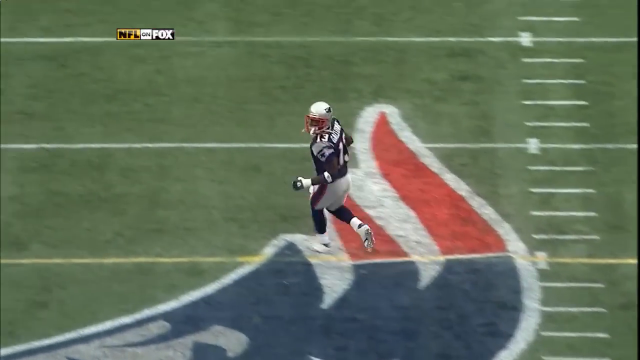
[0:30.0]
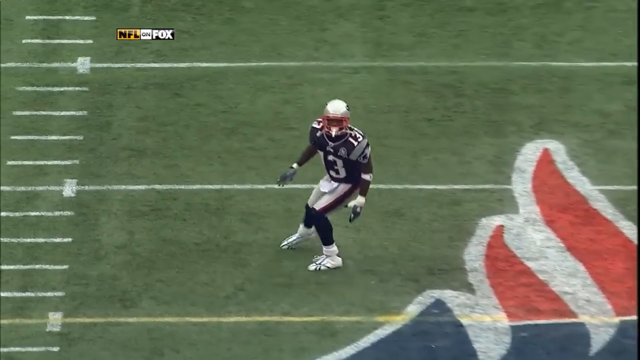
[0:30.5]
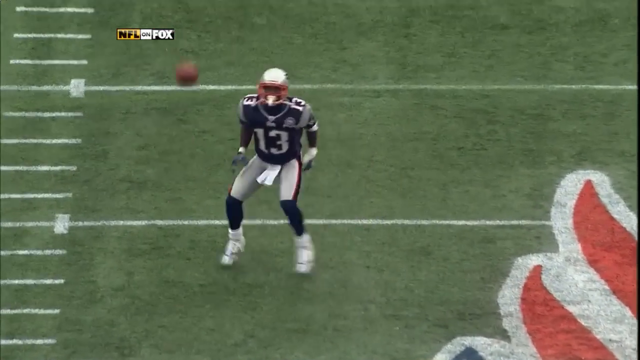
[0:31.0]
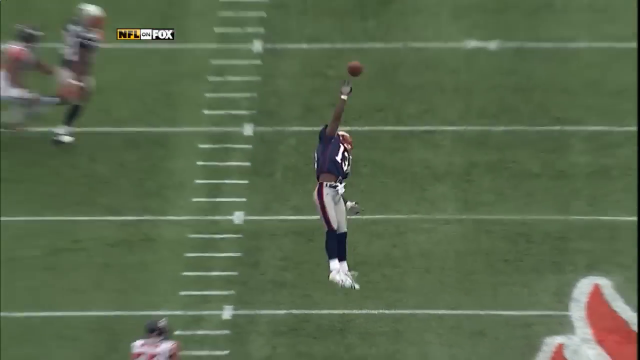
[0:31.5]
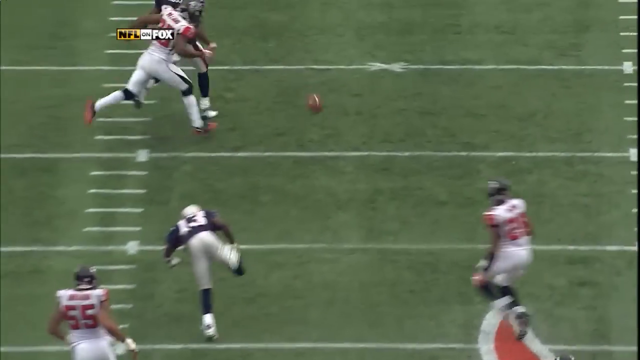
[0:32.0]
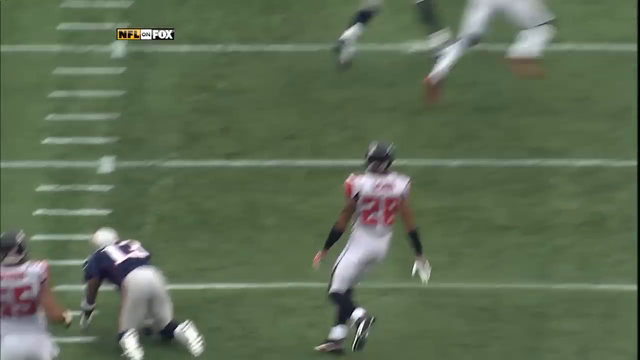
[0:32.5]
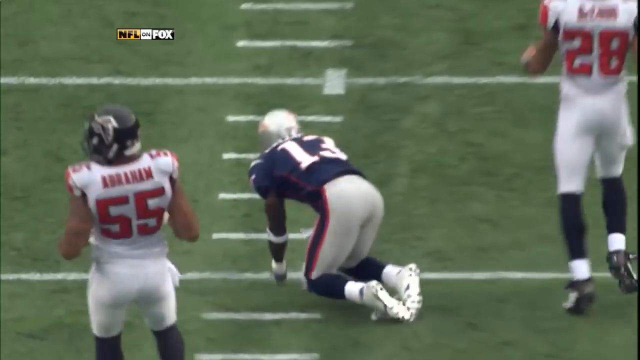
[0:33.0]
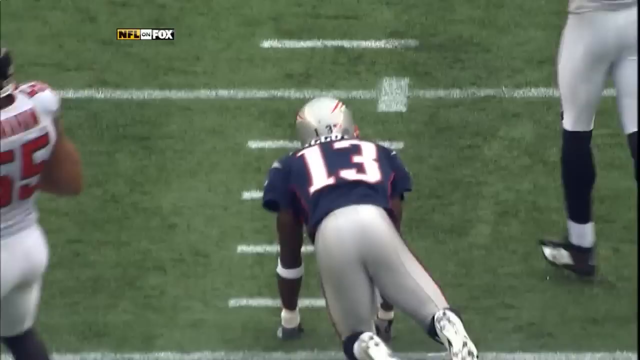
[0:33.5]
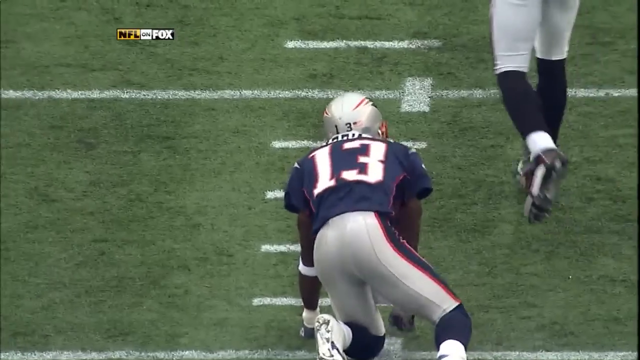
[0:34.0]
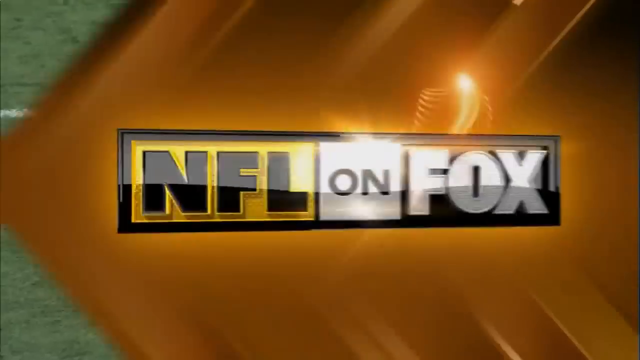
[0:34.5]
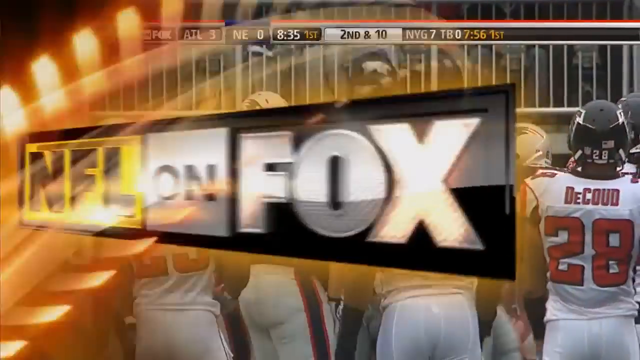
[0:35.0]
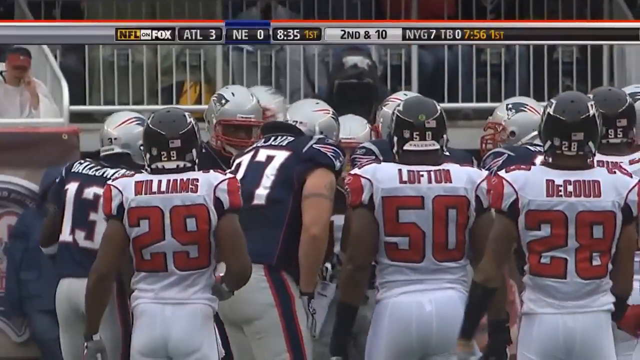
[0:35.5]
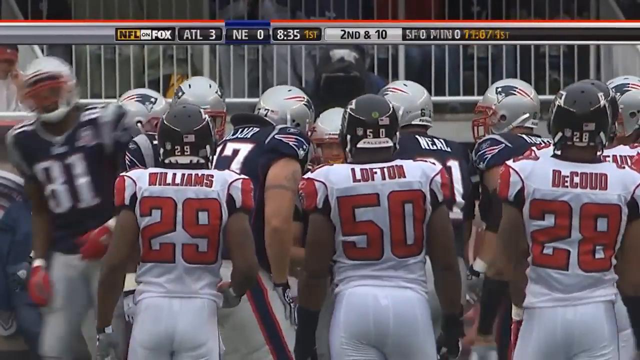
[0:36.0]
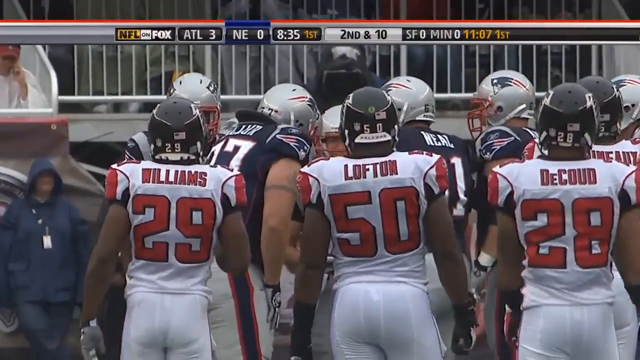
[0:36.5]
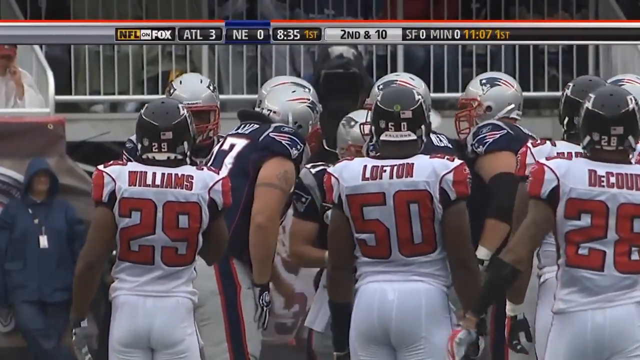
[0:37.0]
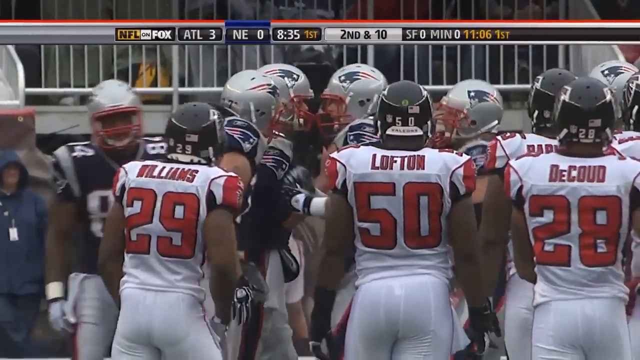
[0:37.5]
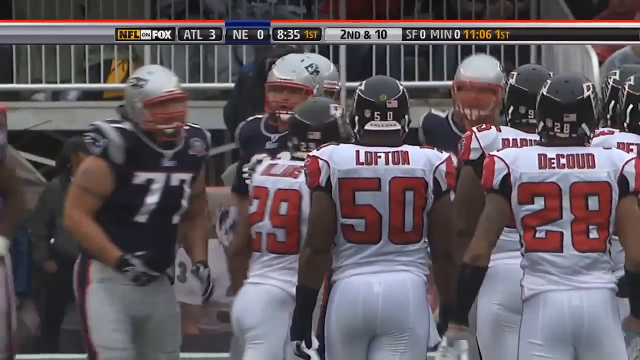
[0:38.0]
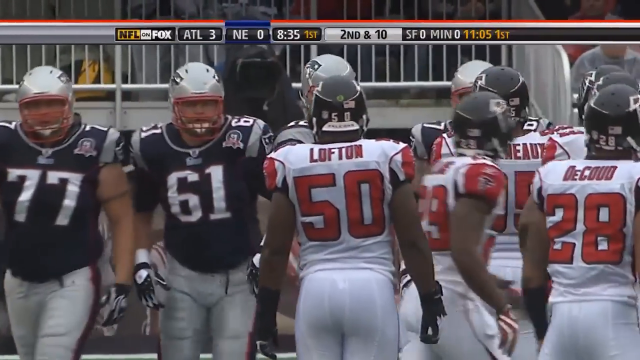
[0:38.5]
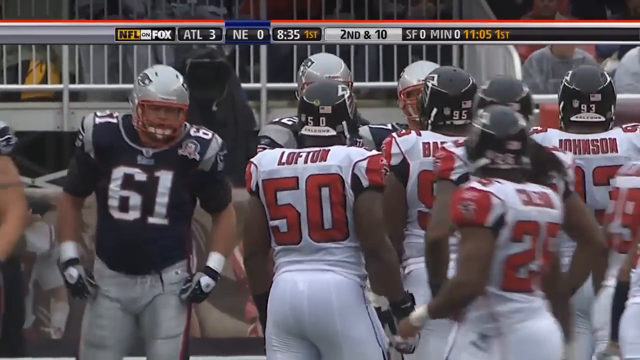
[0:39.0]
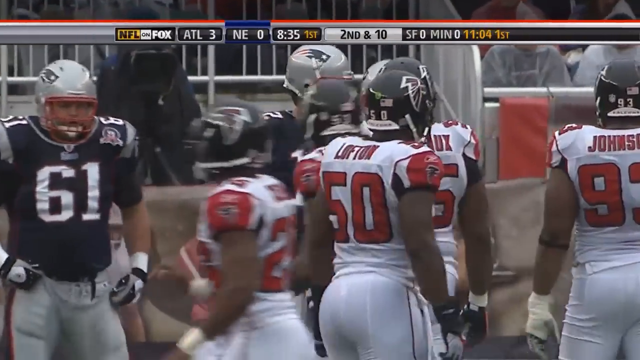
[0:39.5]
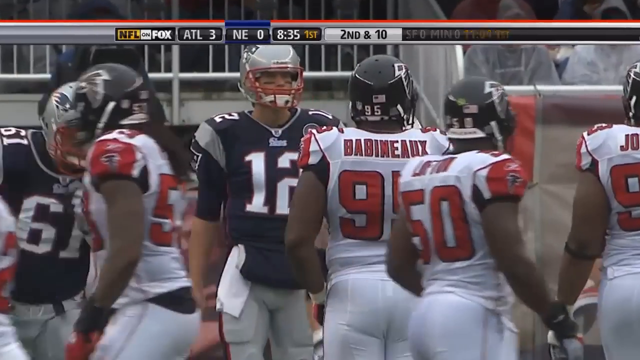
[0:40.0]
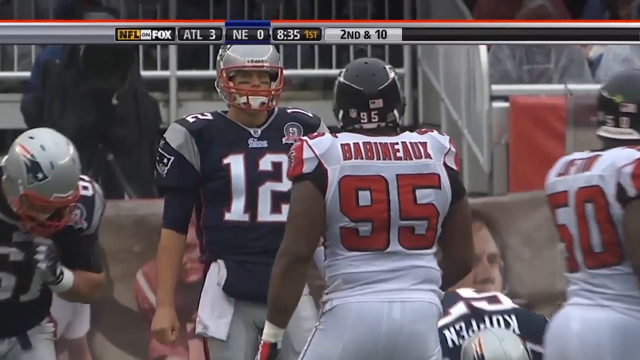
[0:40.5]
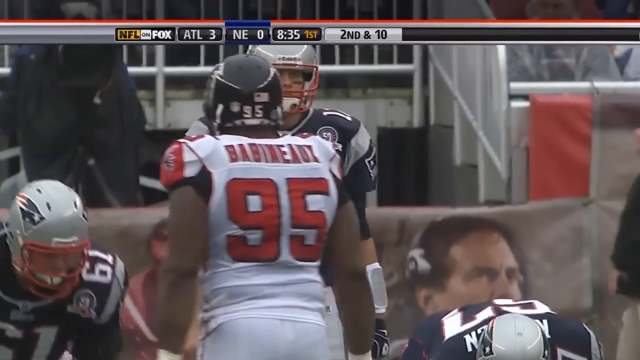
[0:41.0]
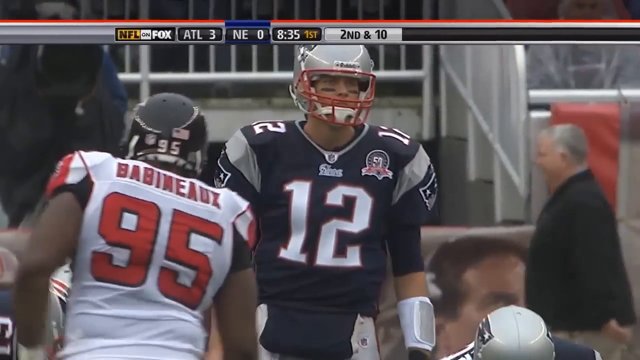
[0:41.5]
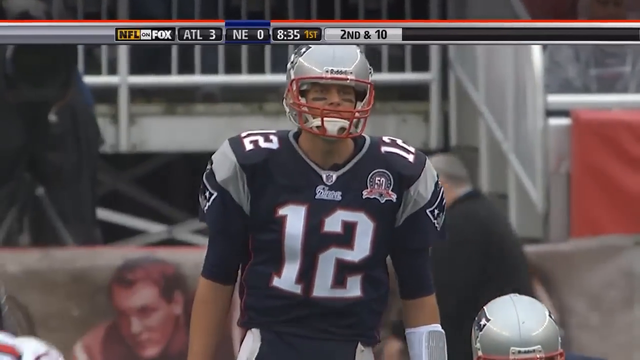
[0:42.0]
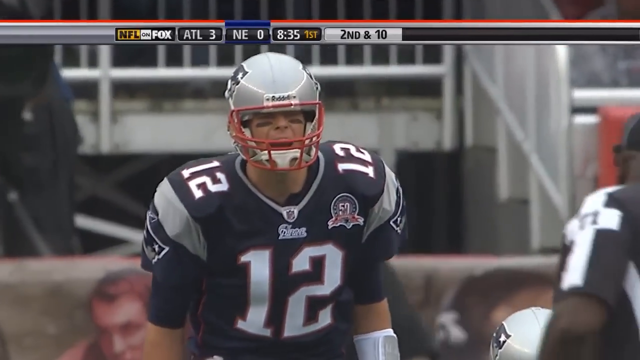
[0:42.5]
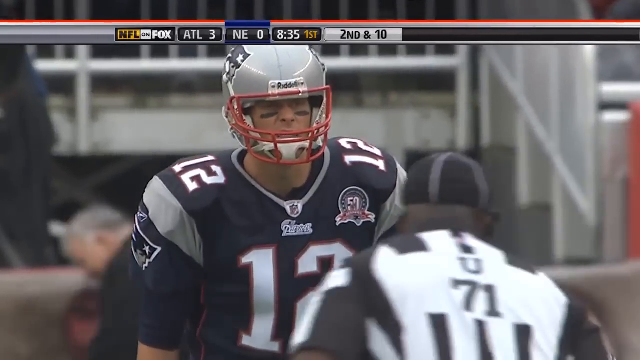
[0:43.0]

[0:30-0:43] In the replay, number 13 stops prematurely near the New England Patriots logo, and the ball is overthrown above his head. He leaps and tips the football with his right hand while in the air, though the ball was intended for his teammate wearing number 81. As he falls to the ground, number 13 looks up and sees that teammate being defended by an Atlanta Falcons cornerback. The replay ends with the NFL on Fox logo. Tom Brady once again huddles with his team, calling out plays. It is now 2nd and 10, still in the first quarter, with 8 minutes and 35 seconds remaining. The offense then gets into its lineup as they prepare for the next play.